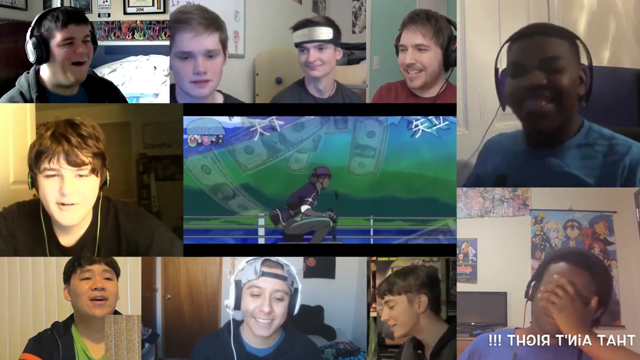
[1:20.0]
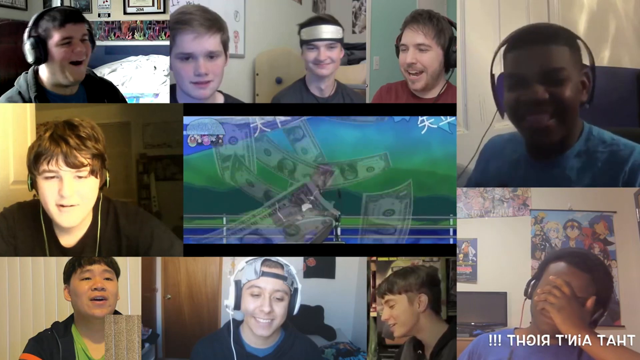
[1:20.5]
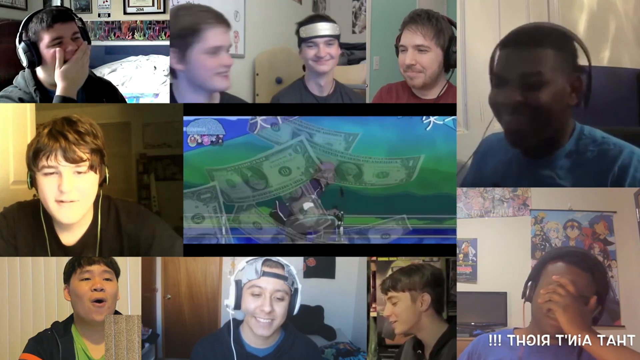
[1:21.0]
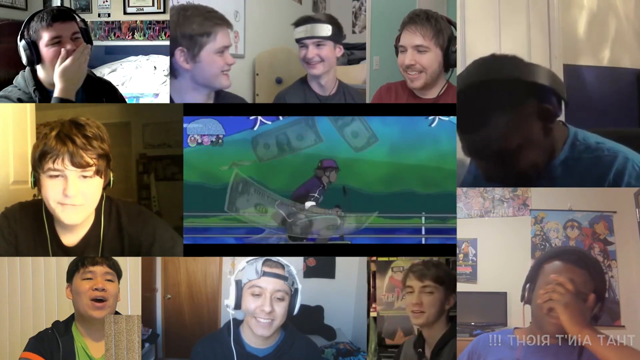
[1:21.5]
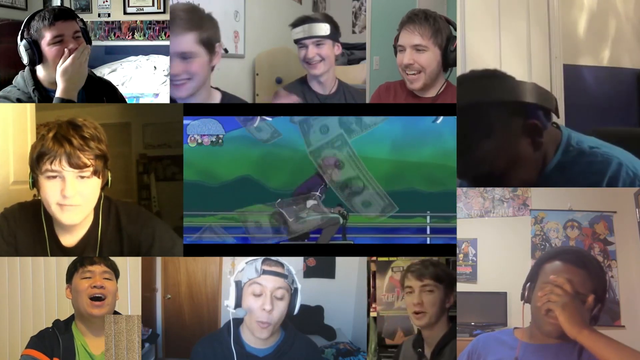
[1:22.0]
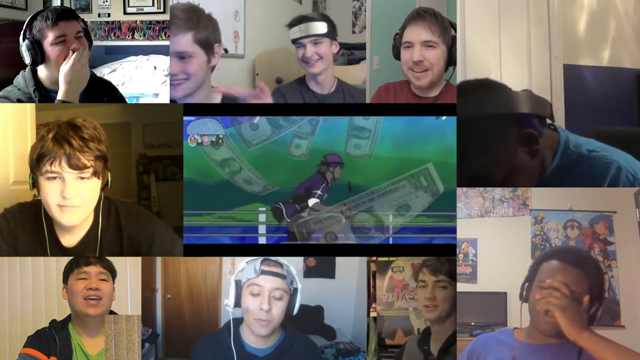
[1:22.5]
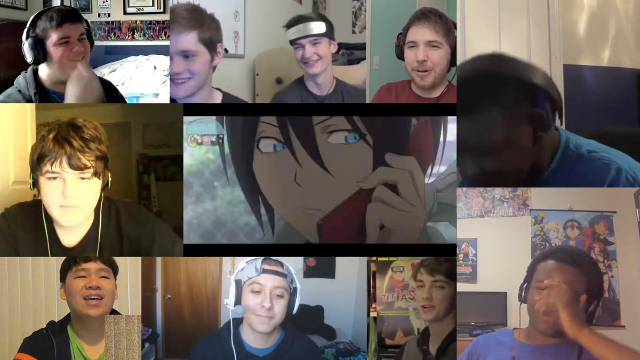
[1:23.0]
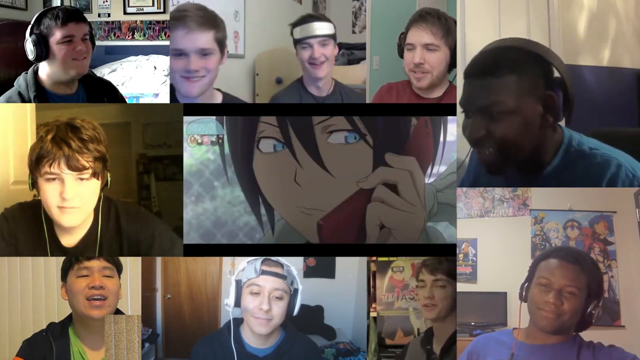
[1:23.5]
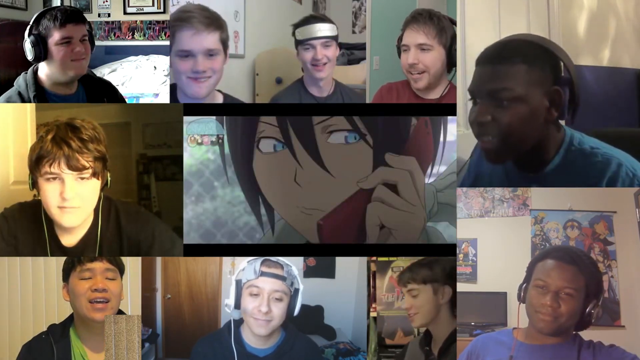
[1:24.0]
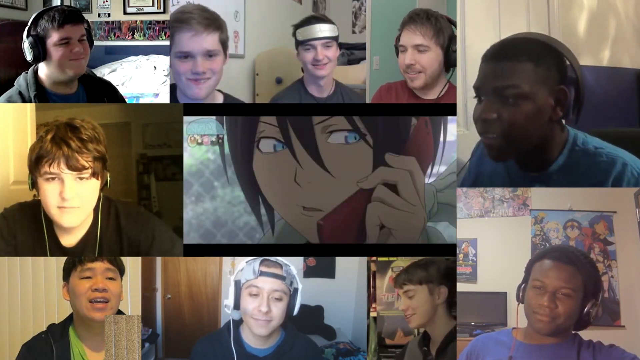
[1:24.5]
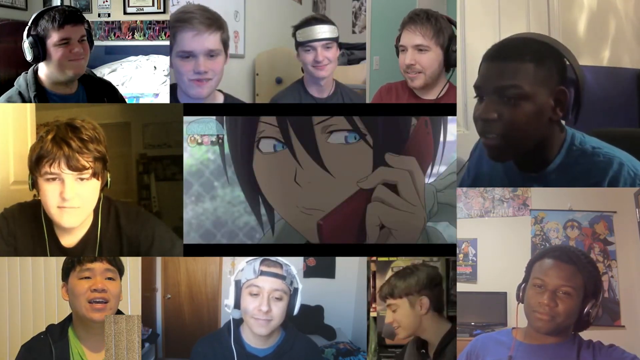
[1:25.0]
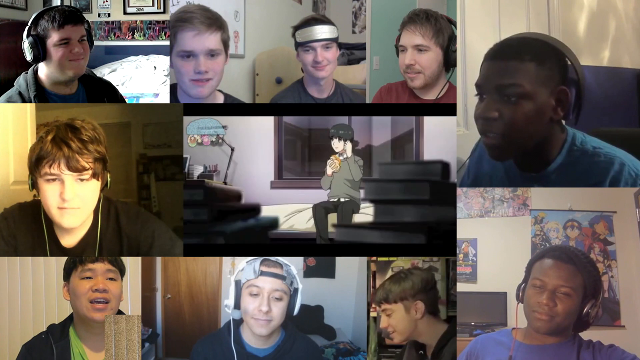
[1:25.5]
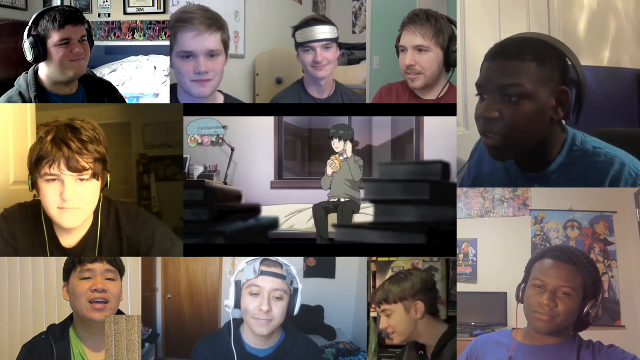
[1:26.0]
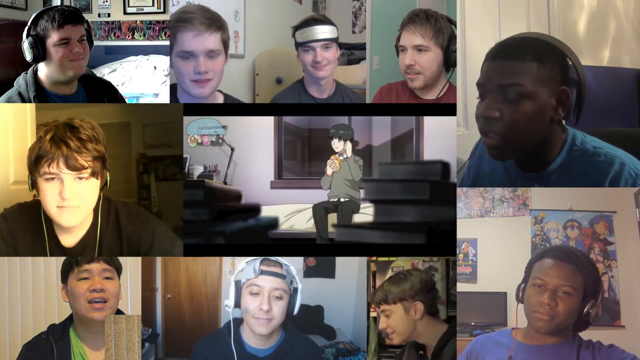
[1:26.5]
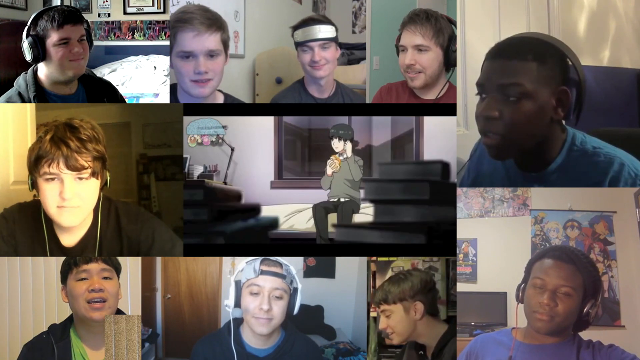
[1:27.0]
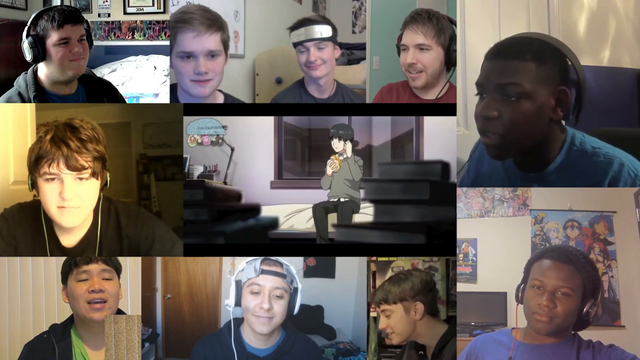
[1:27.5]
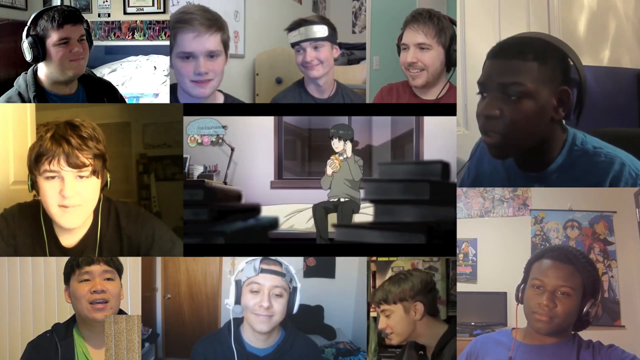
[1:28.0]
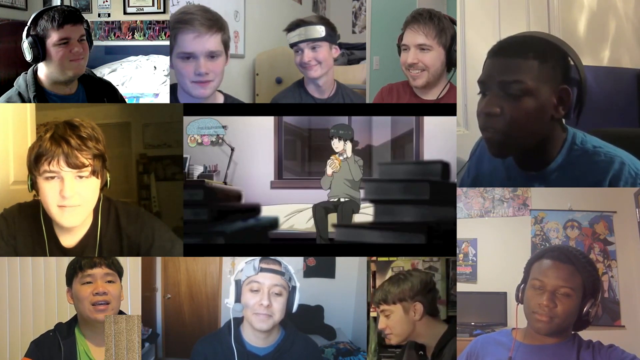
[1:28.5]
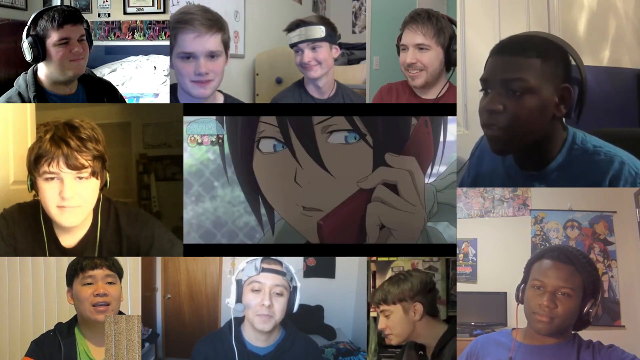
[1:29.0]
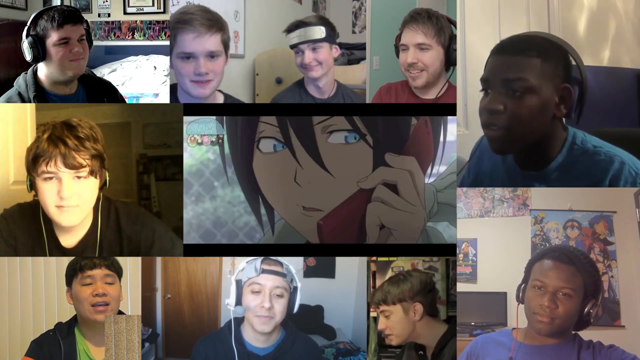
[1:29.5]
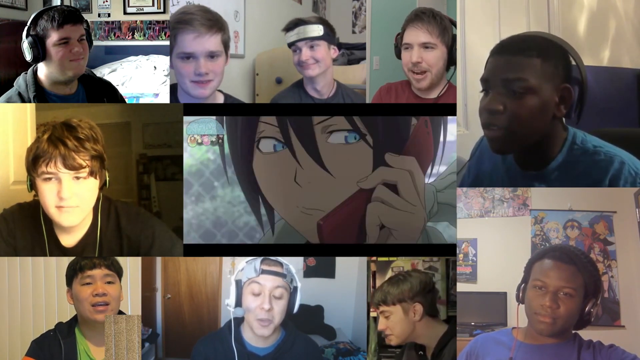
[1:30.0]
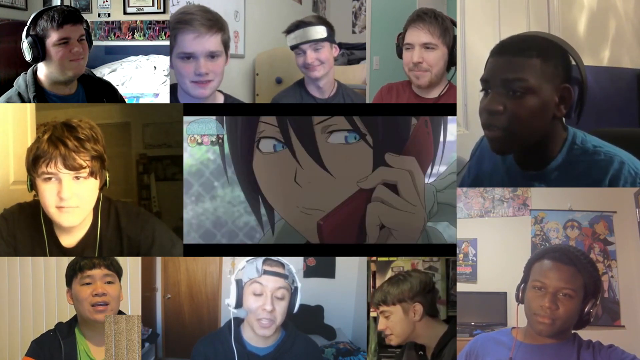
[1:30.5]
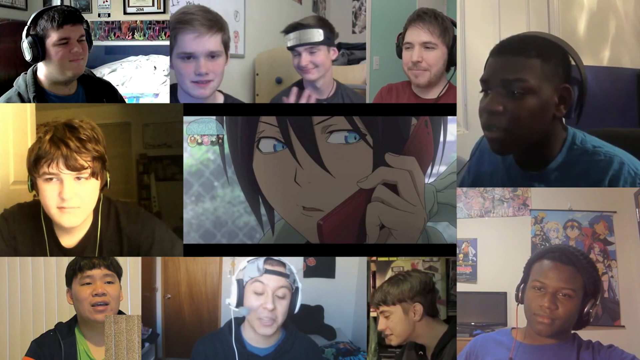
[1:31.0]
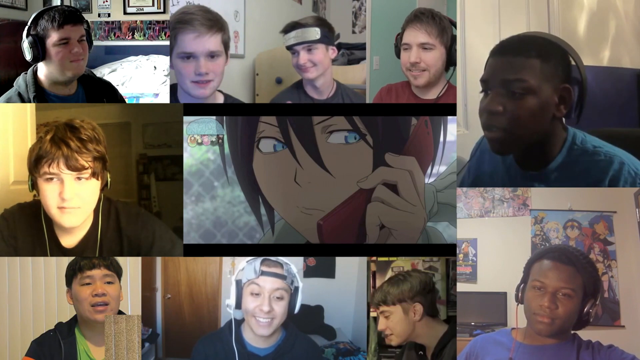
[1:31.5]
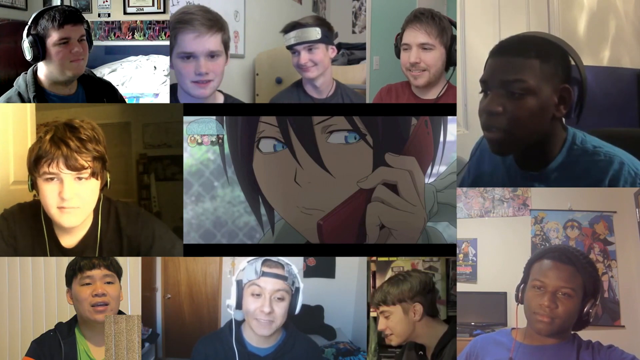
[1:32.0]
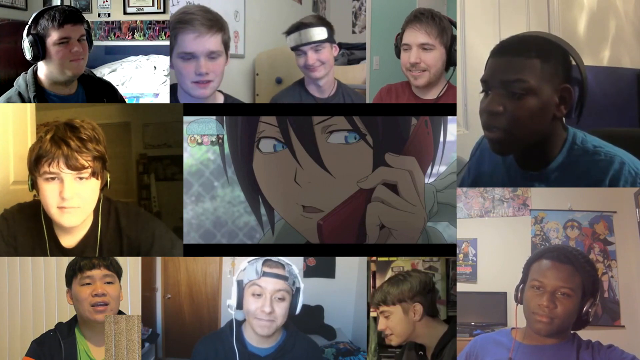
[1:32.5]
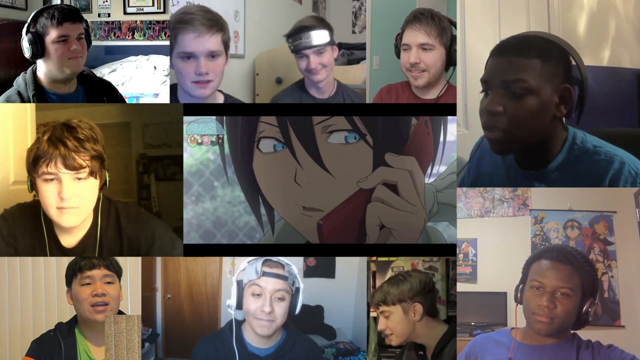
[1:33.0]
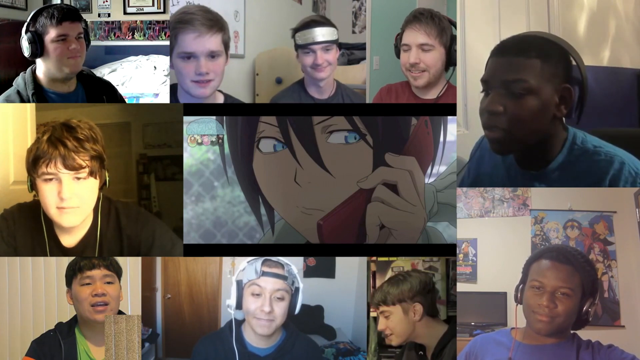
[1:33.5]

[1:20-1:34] A group of guys who look like they are on some kind of live stream or webcam react to animated videos together. Most of them wear headphones, and they are all kind of laughing and goofing off. In the center is an animation of a character who looks like he is on a scooter or some kind of moped, flying by quickly with cash kind of coming down, while the guys laugh and goof off. It transitions to an anime girl with long black hair and blue eyes who looks like she is on the phone, talking. A boy who looks like he has a sandwich in his hand is also on the phone, and then the girl on the phone appears again. Some of the guys watching talk, especially the one in the red shirt at the top, who laughs toward the end.